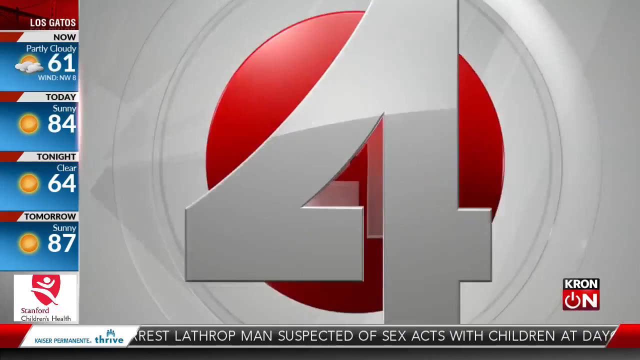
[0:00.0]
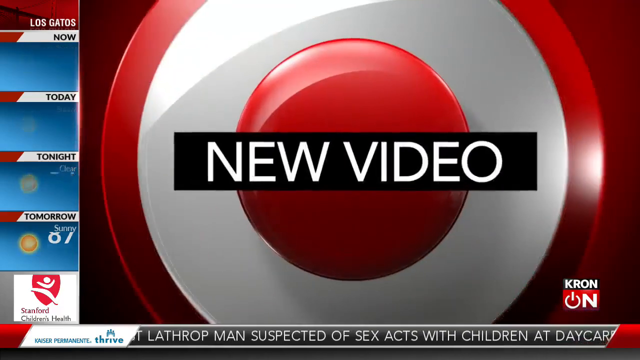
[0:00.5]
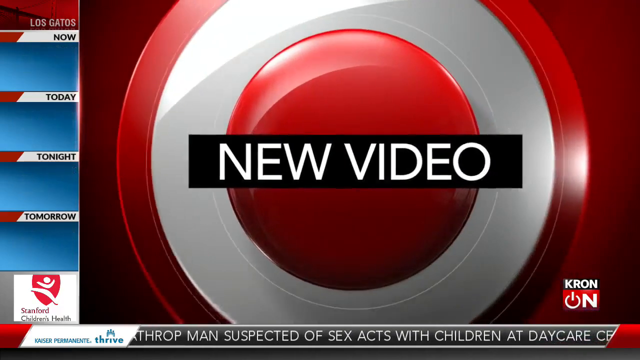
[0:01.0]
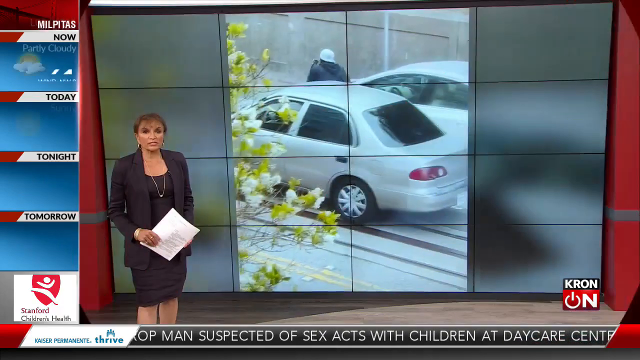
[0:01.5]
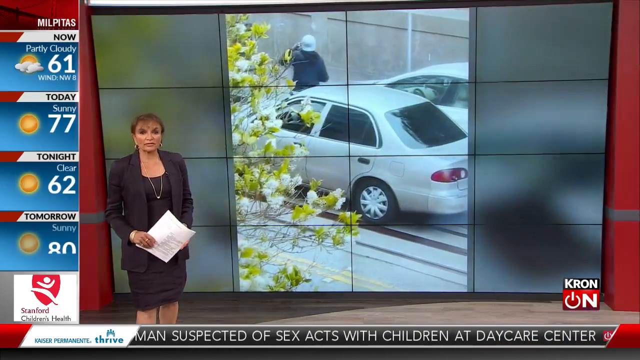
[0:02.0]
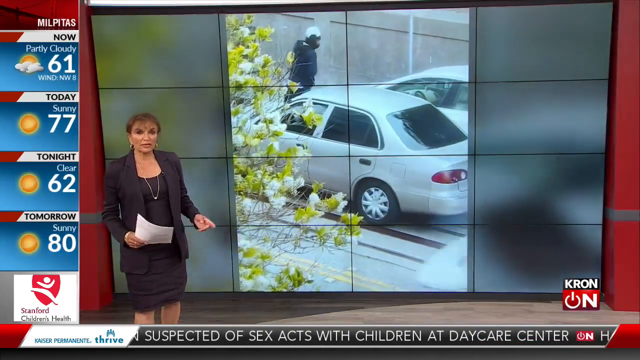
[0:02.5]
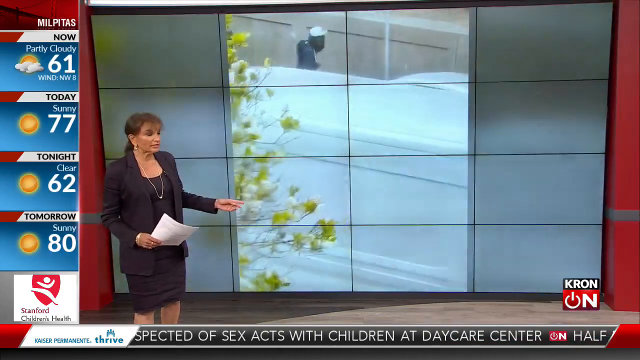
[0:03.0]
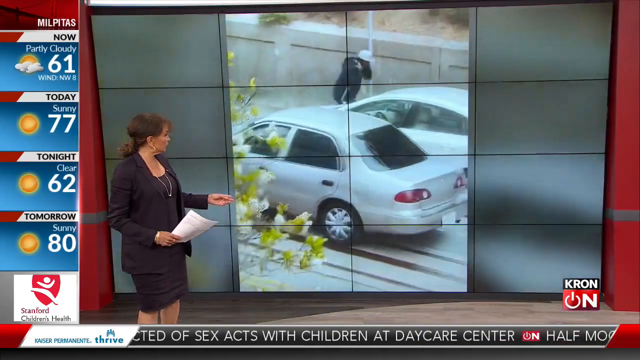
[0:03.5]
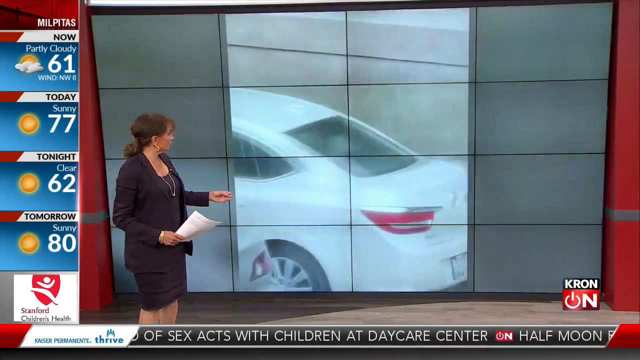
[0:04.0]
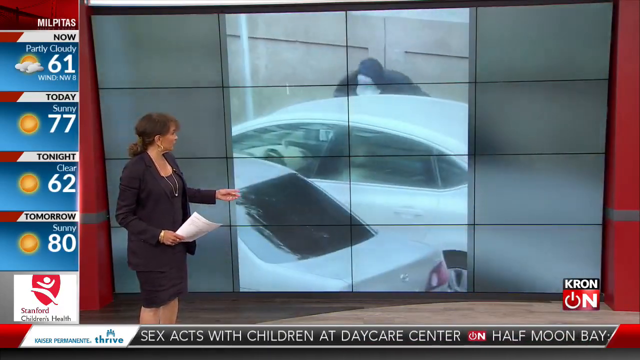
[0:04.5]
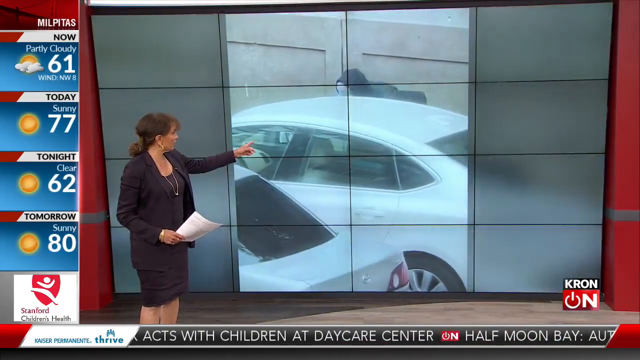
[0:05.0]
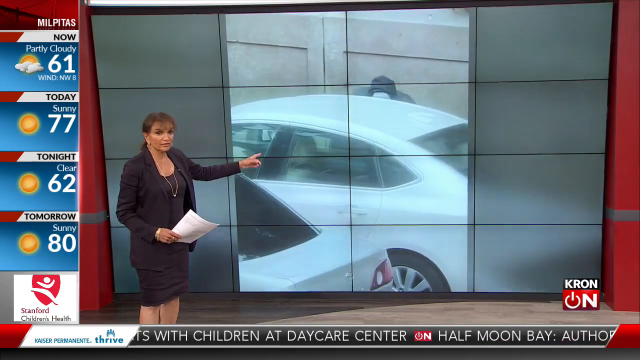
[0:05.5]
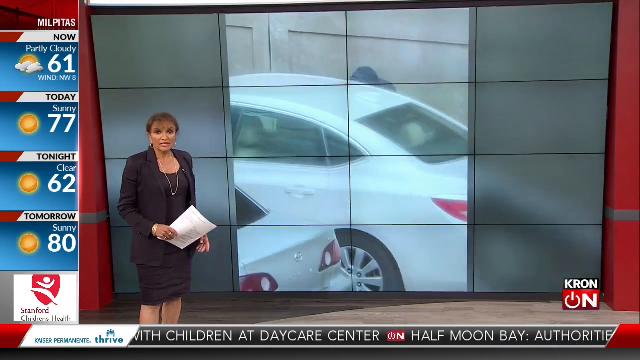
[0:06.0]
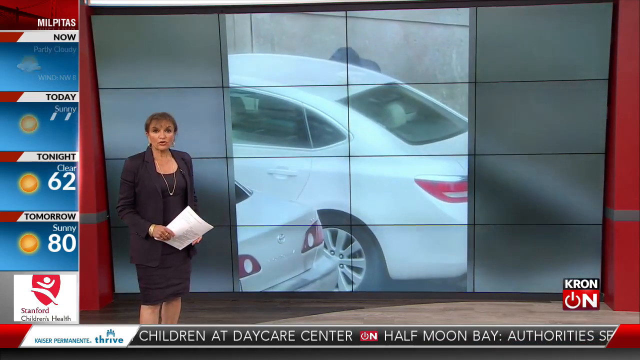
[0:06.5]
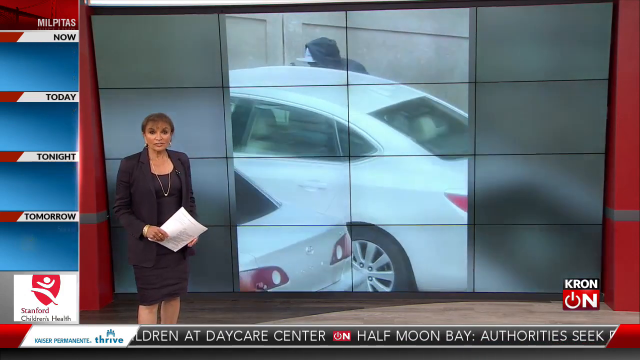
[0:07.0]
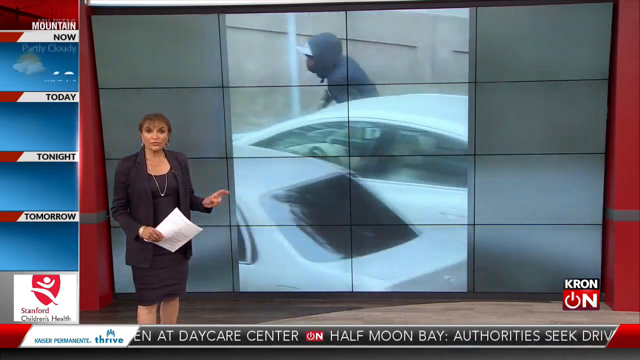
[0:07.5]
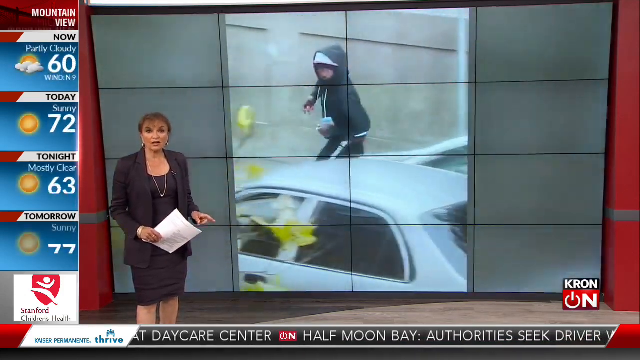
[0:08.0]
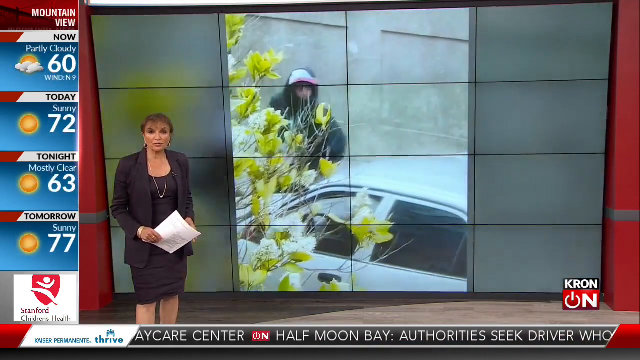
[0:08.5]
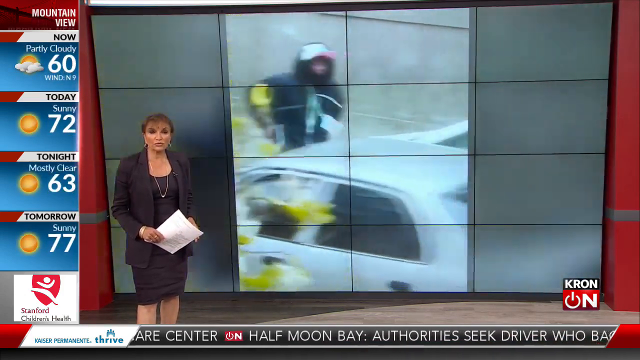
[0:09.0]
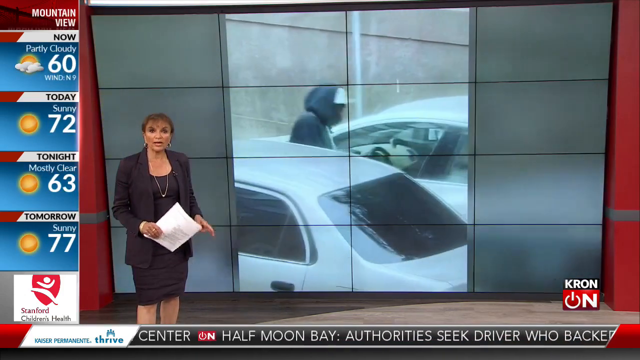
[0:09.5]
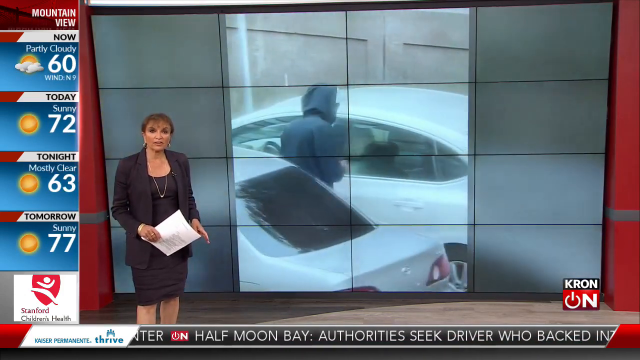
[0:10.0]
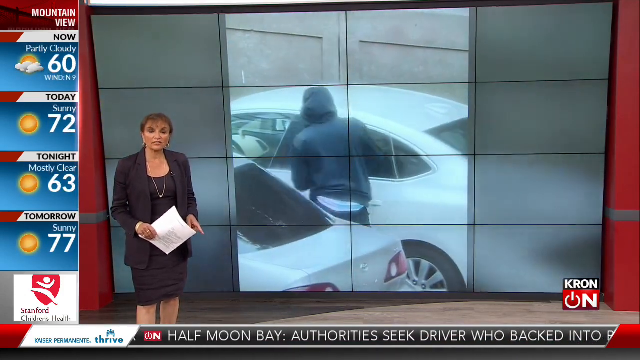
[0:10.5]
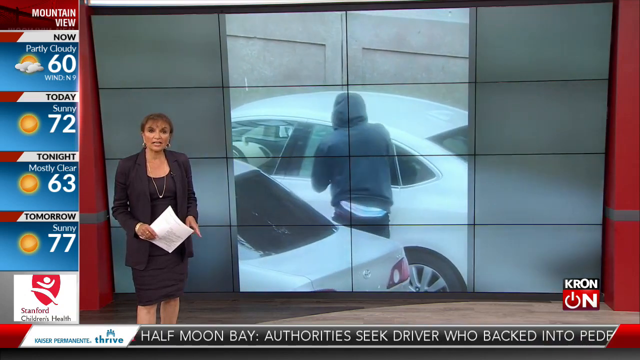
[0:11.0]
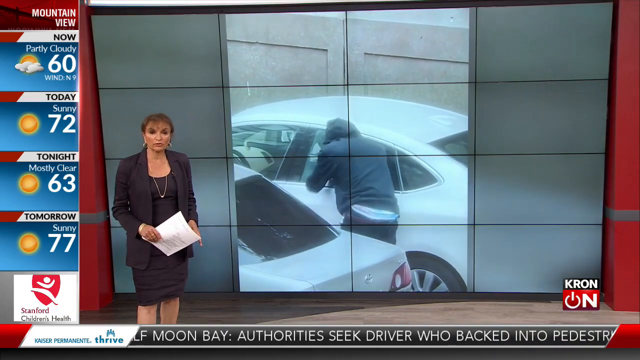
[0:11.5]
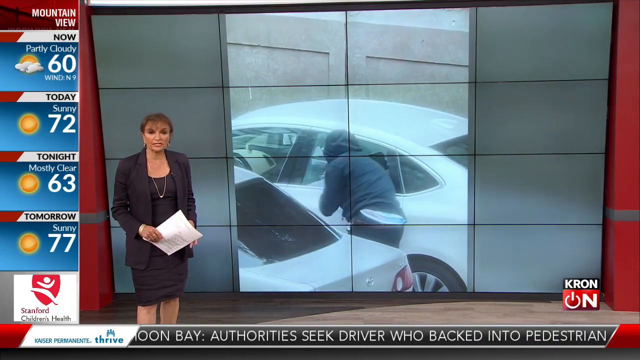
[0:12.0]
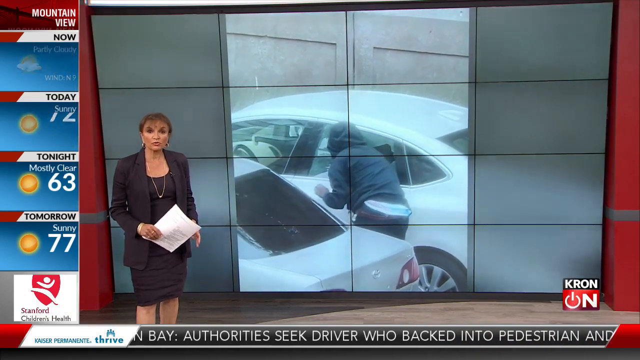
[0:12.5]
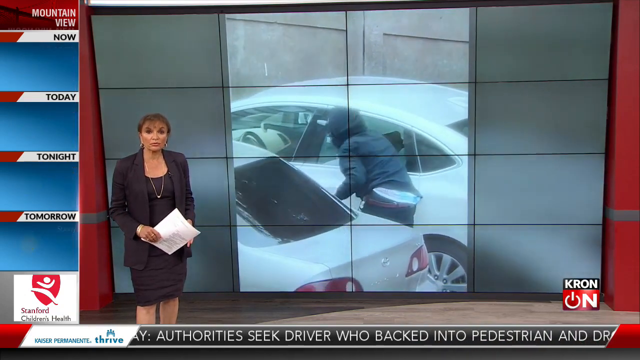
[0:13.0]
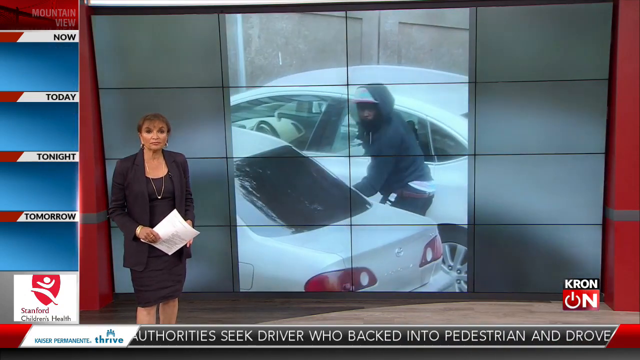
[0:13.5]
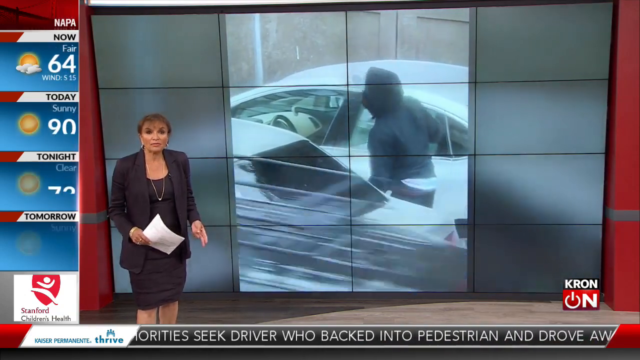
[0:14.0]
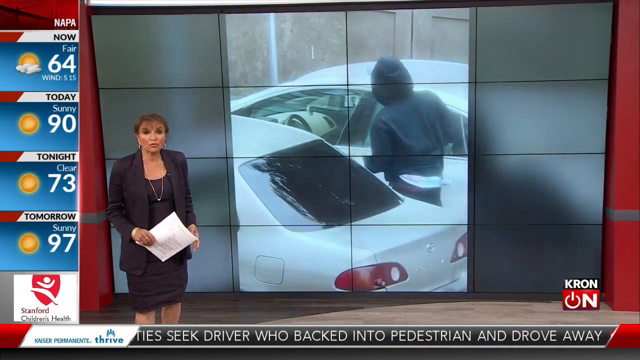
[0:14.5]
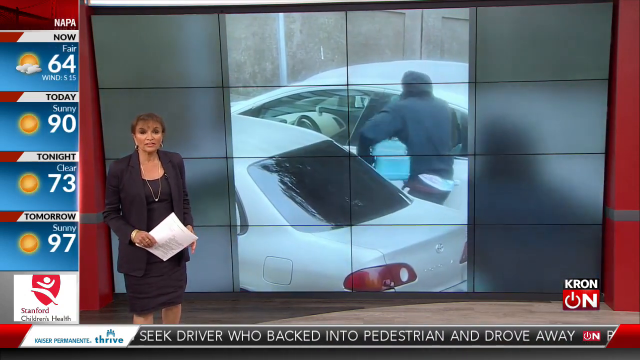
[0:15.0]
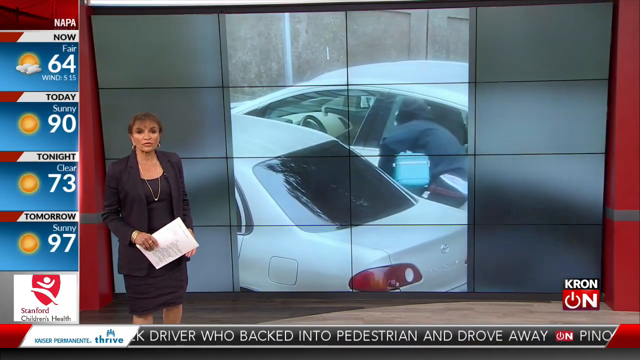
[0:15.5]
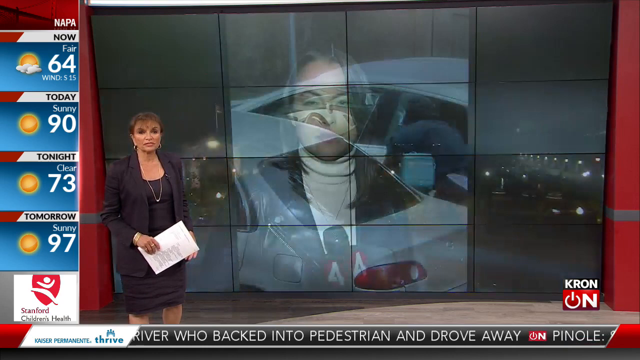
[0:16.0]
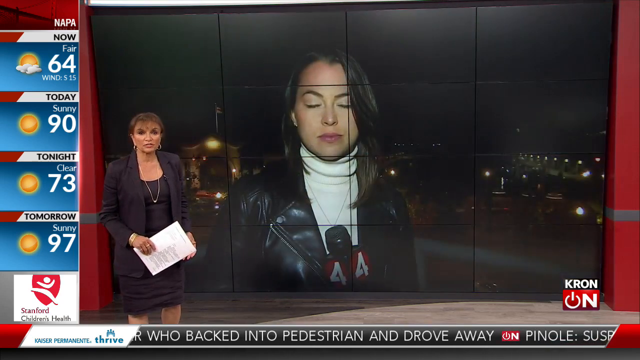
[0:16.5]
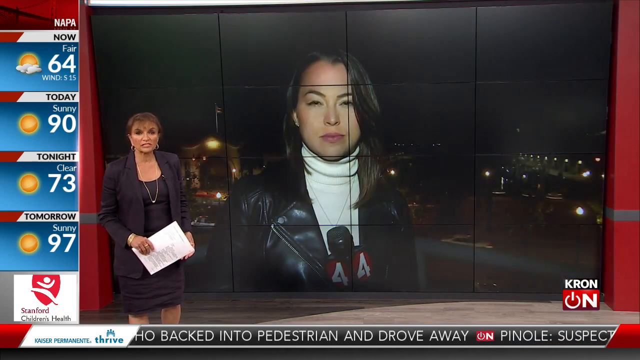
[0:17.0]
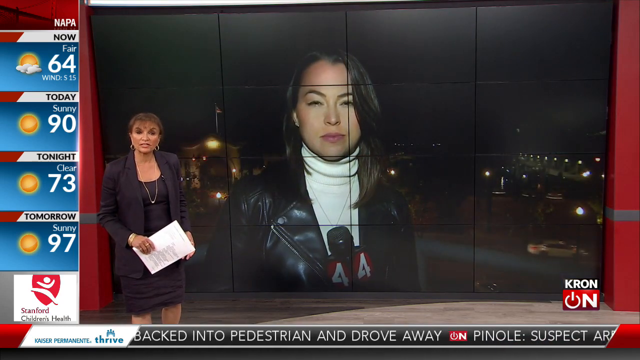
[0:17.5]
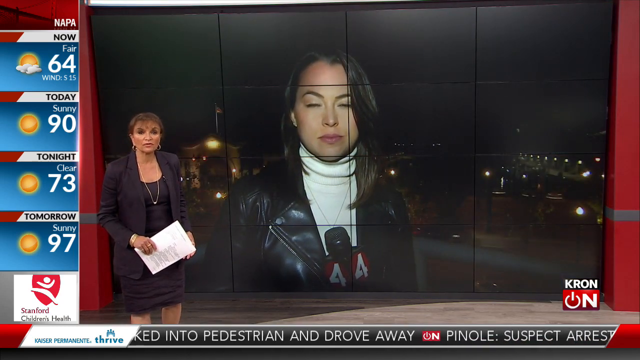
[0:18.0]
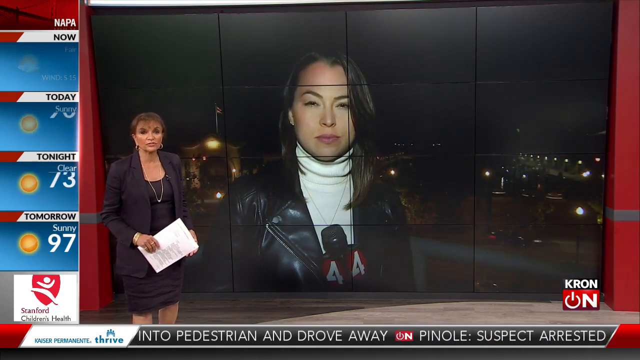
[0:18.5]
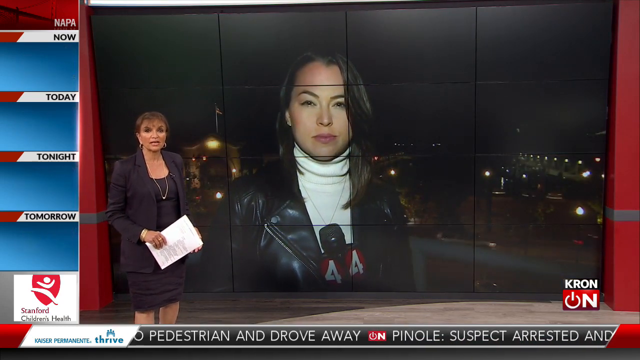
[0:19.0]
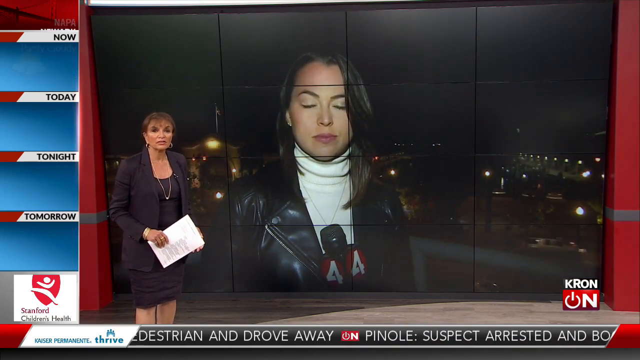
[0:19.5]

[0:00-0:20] The footage comes from a news channel called KRON, whose logo appears in the bottom right-hand corner of the picture. It opens with a weather forecast for Los Gatos. The first entry is partly cloudy at 61 degrees, with an icon of a sun with clouds in front of it. Next is a sun icon with "sunny 84" for today. Tonight is clear with a forecast of 64 degrees, also with a sun icon. Tomorrow is sunny at 87 degrees, again with a sun icon. Underneath is a logo of a shield with a bubble-like person inside it. The words "new video" appear, and the scene moves to a female newscaster holding a paper while a video of a carjacking is shown. It then cuts to another reporter on the scene, a woman who appears to be waiting for the first woman to finish talking before continuing the report.